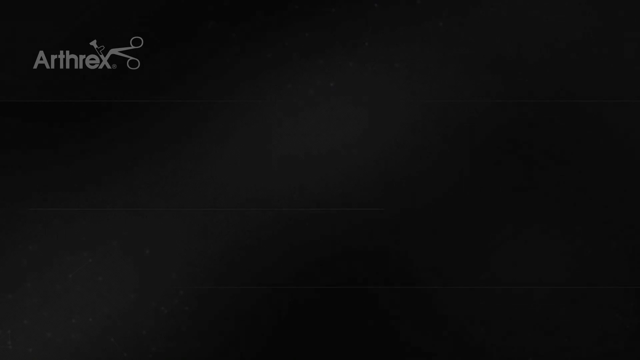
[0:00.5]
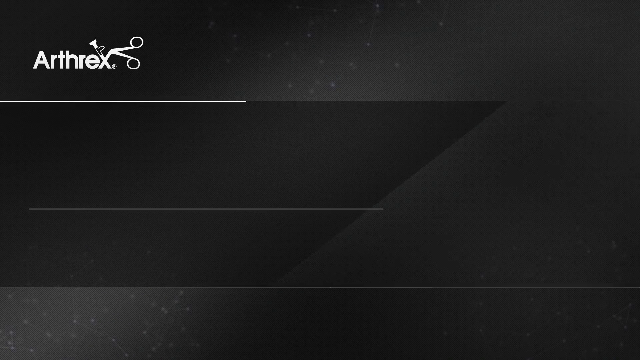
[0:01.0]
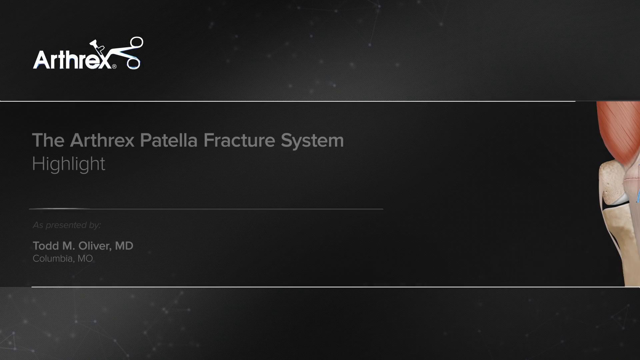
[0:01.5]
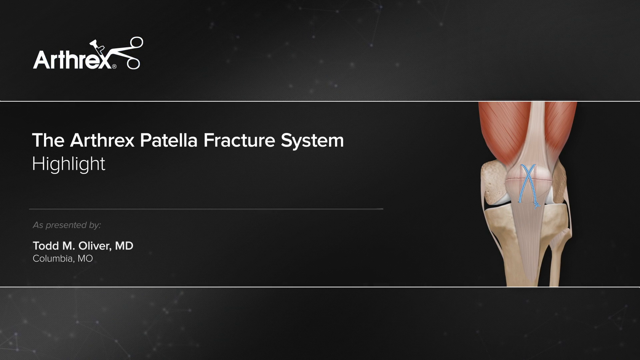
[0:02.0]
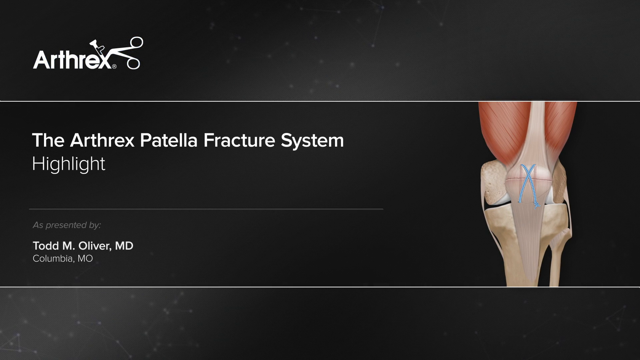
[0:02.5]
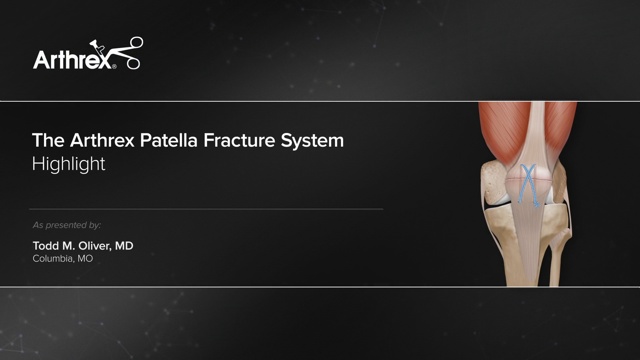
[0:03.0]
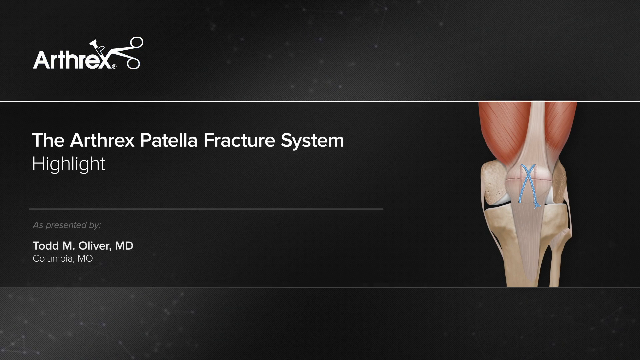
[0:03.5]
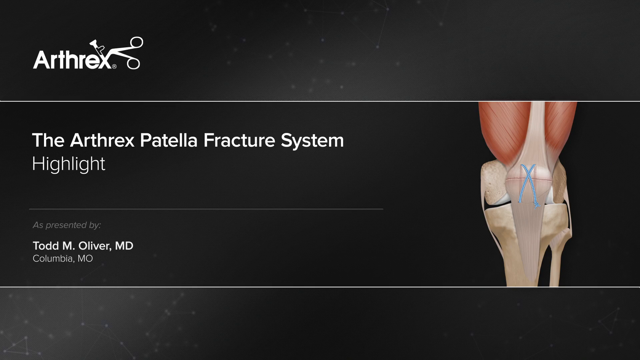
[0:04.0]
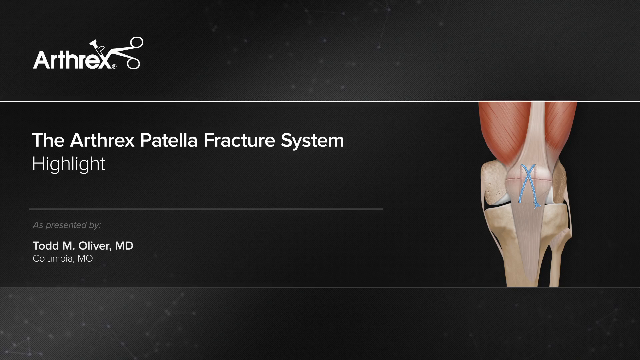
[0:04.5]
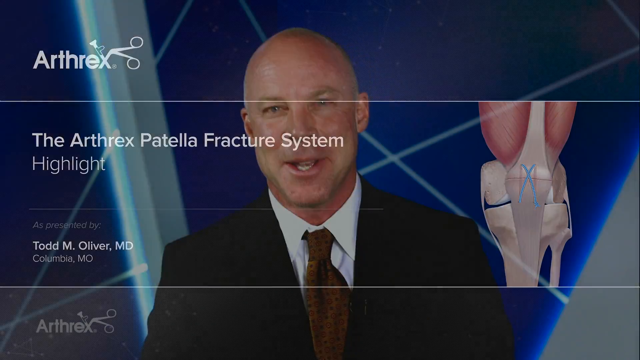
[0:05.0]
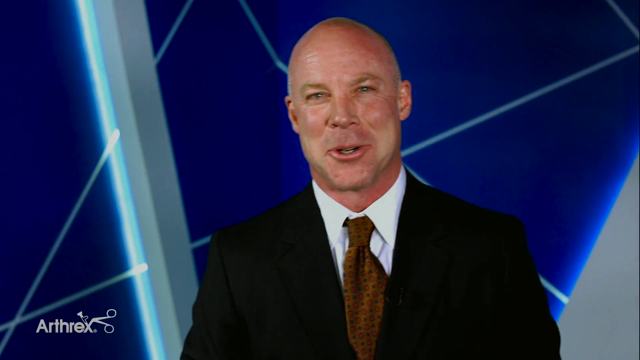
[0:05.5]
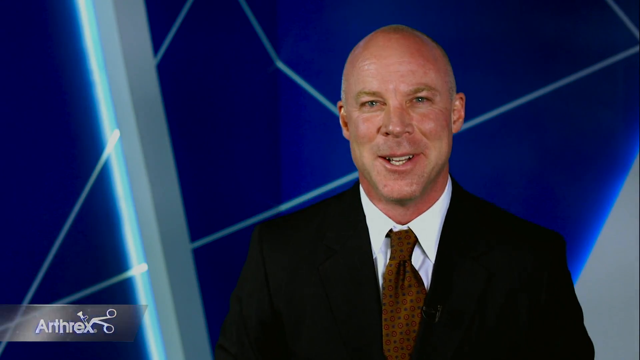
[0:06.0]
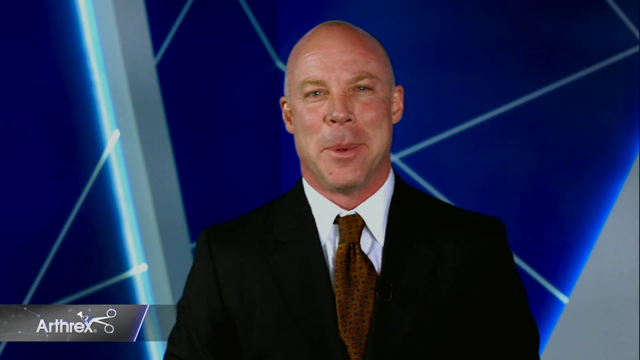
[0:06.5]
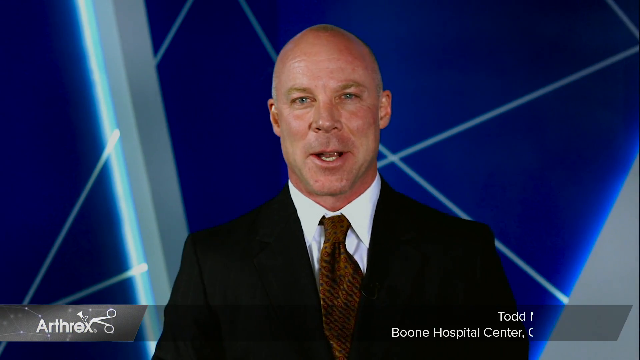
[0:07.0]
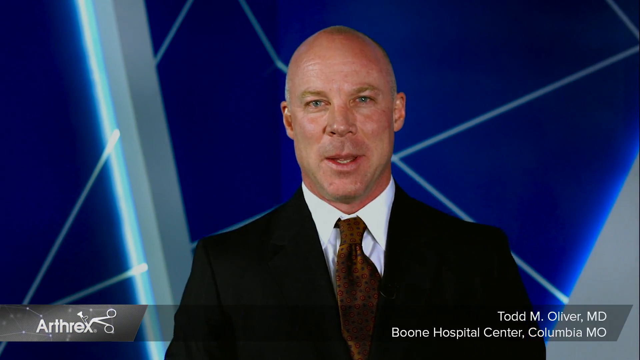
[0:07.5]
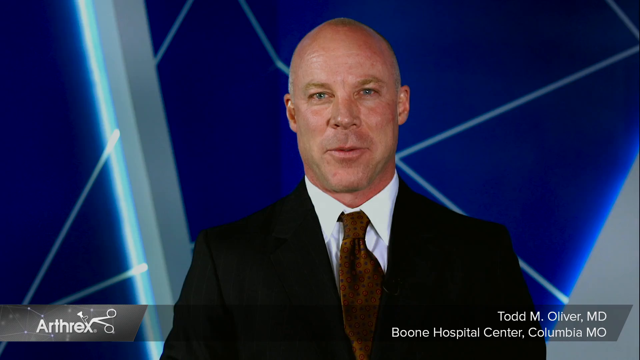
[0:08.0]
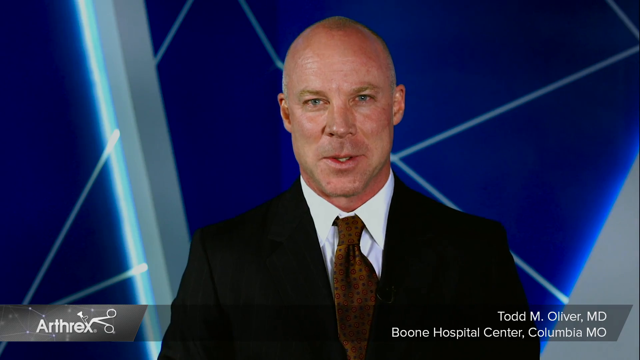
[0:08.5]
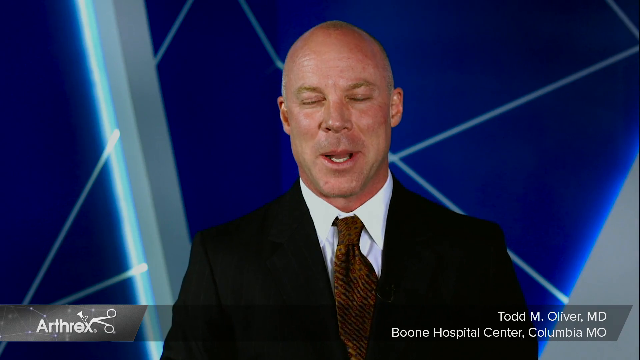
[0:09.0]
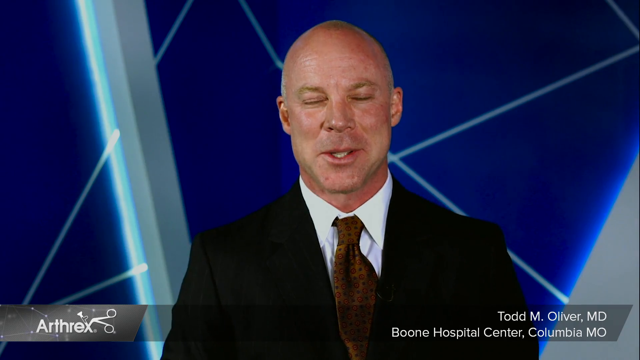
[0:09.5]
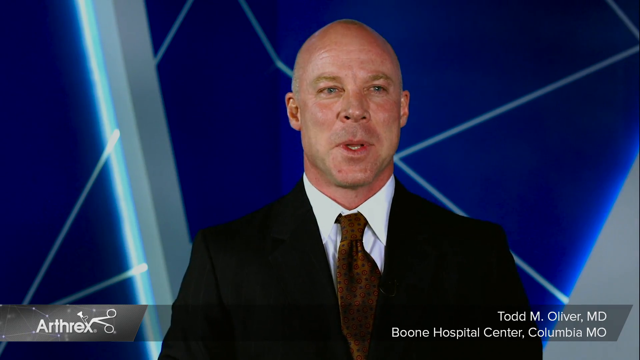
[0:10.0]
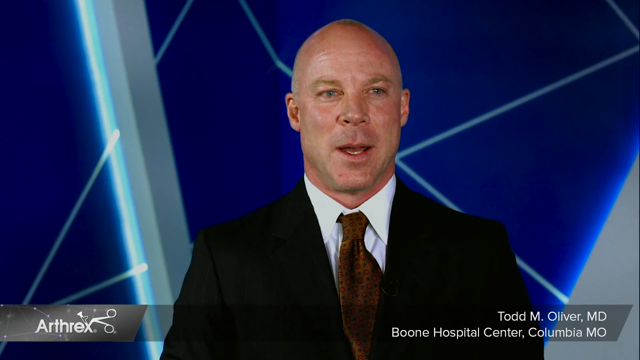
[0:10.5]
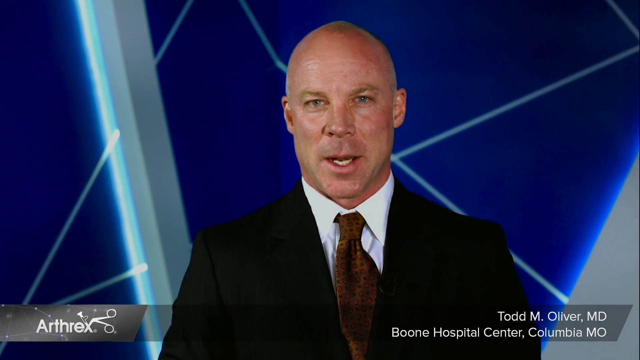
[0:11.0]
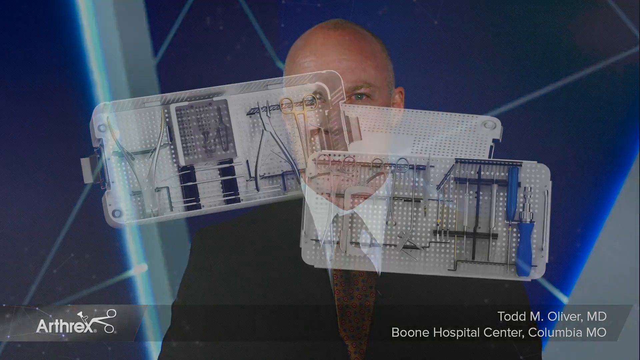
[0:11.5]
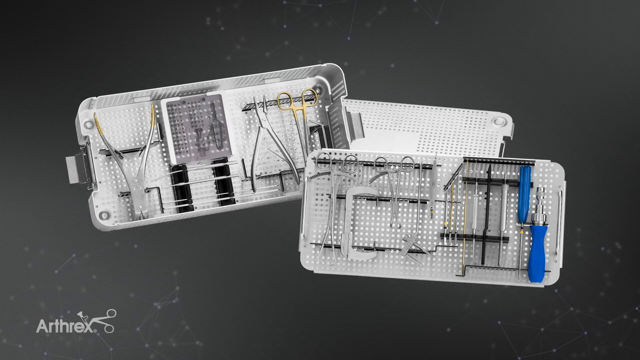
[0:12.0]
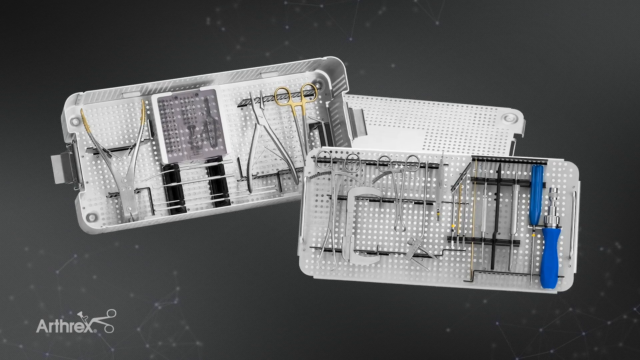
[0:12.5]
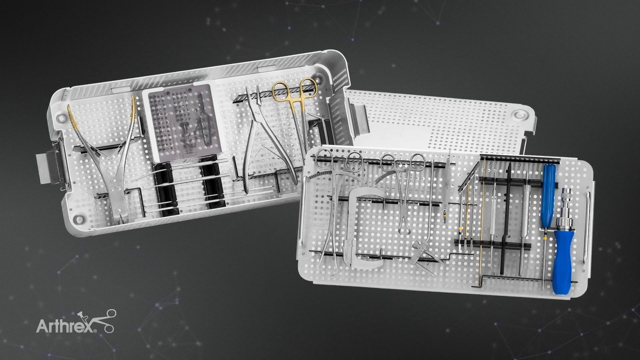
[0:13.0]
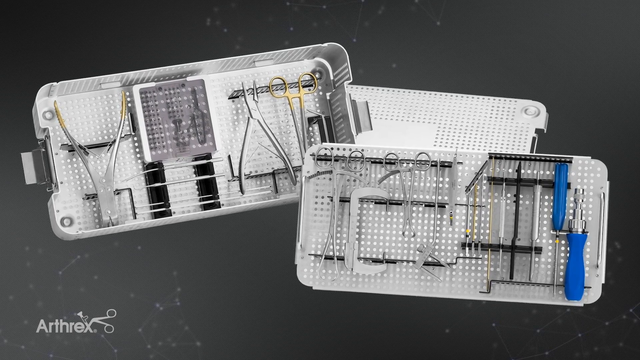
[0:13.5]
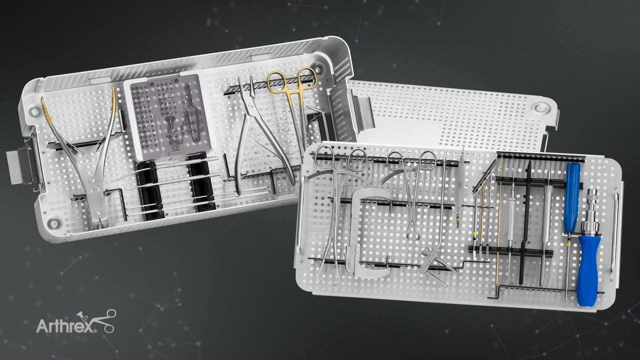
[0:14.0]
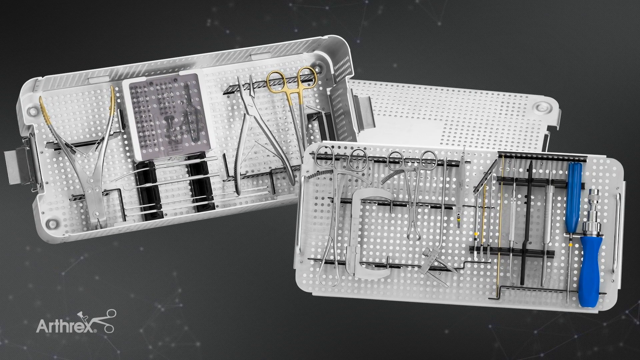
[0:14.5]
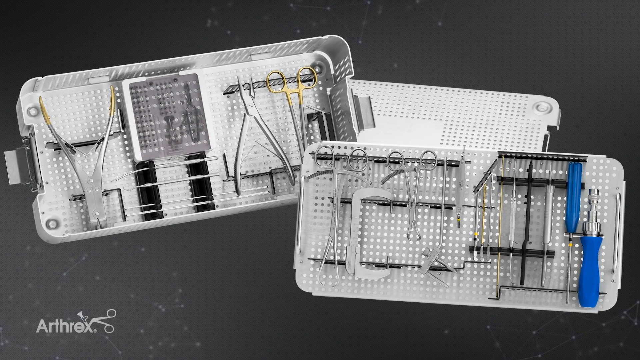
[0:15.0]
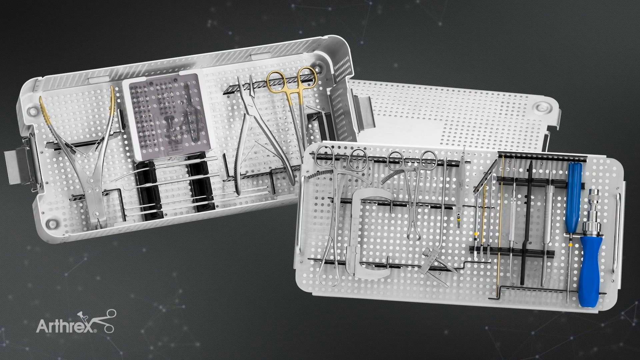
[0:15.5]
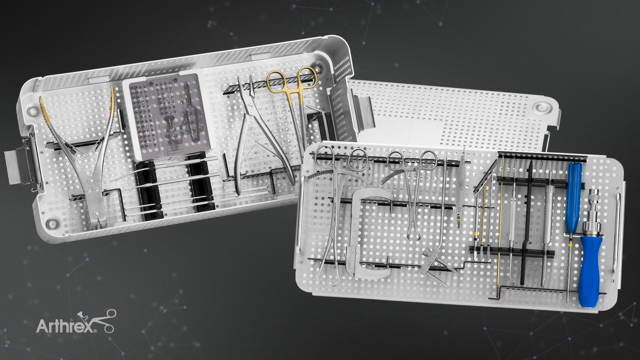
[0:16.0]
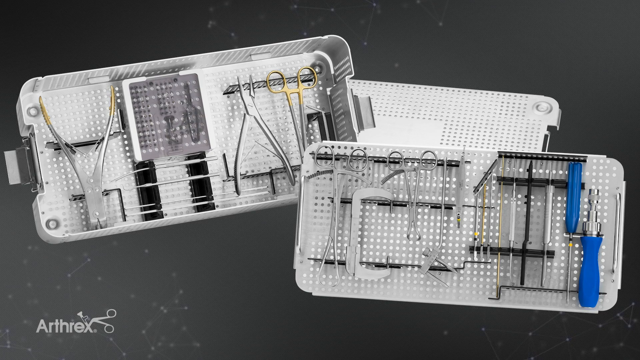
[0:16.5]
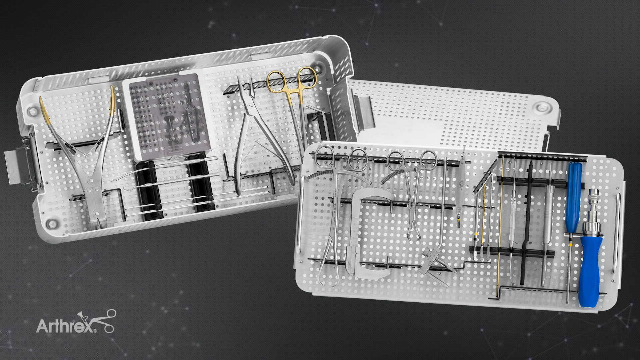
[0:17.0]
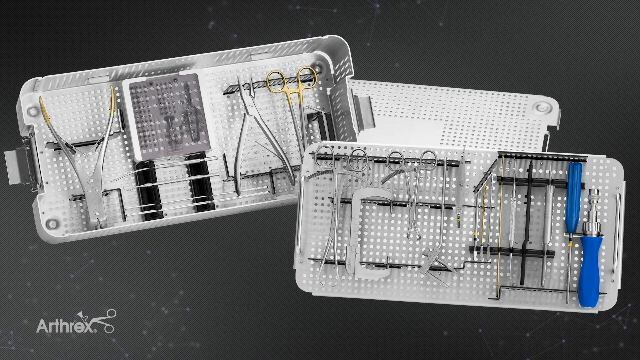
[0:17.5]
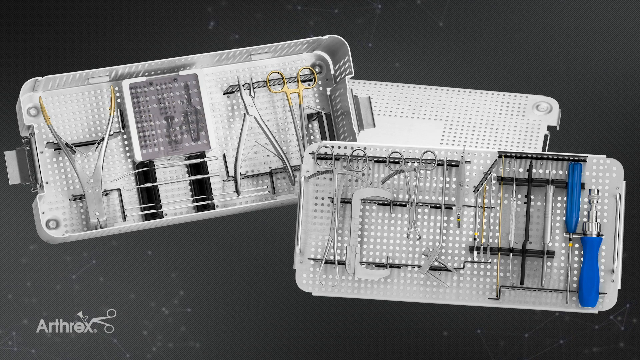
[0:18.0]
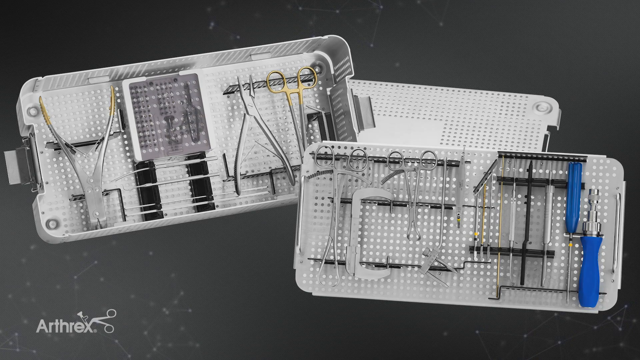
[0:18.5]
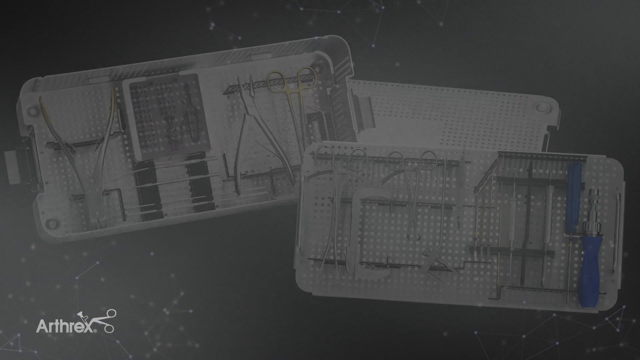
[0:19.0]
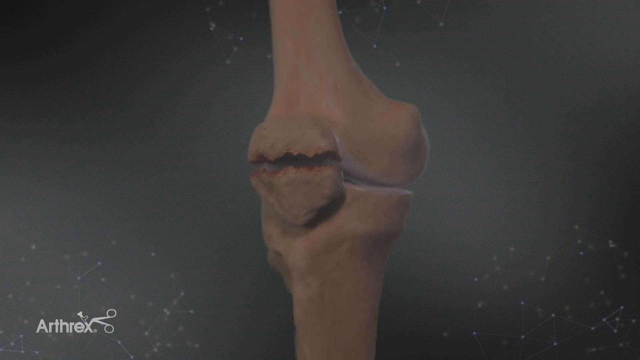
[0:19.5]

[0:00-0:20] The video concerns the Arthrex Patella Fracture System. It opens with what looks like a presentation slide. "Arthrex" appears at the top left as the Arthrex logo, with something like a pair of scissors forming part of the X. On the right is a kind of 3D diagram, apparently showing where the patella is. Text reads "as presented by Todd M. Oliver, MD, Columbia, MO." The scene then transitions to a man, apparently Oliver, talking toward the camera. He is bald and wears a black dress shirt with a white shirt underneath and a brownish tie. Behind him is a blue background with silver lines going across it. Next comes a close-up of medical supplies: two boxes holding various little scissors and clippers. This is followed by a close-up of a brownish bone.